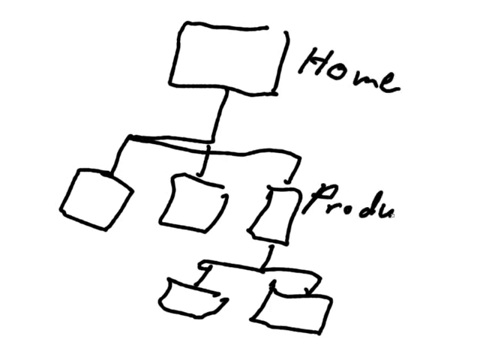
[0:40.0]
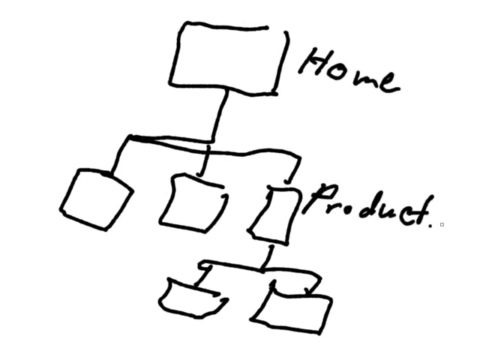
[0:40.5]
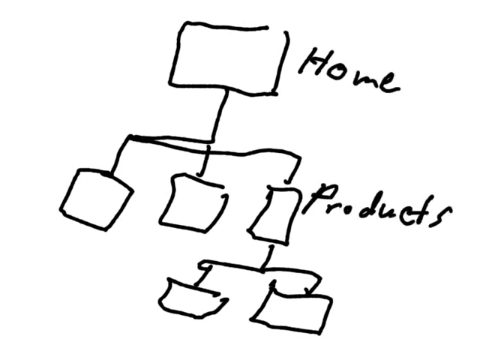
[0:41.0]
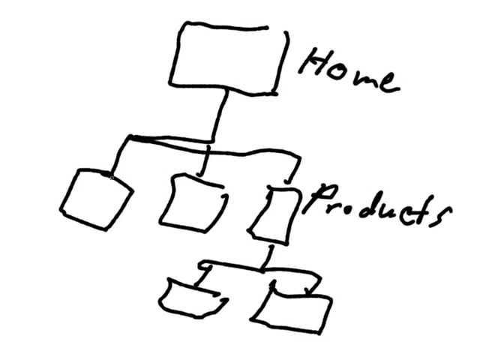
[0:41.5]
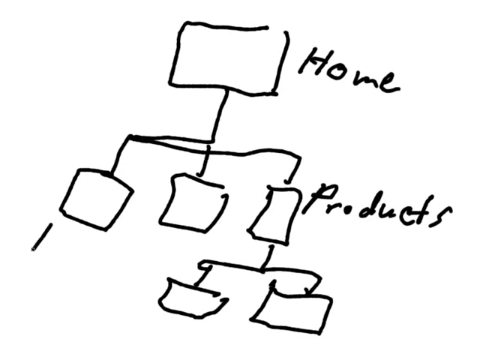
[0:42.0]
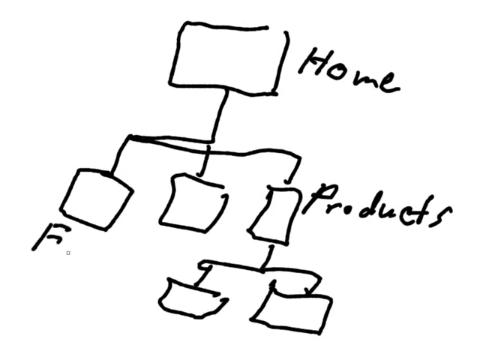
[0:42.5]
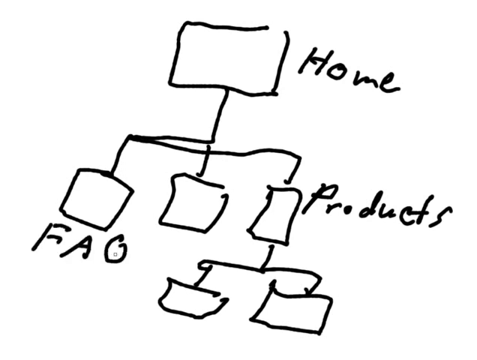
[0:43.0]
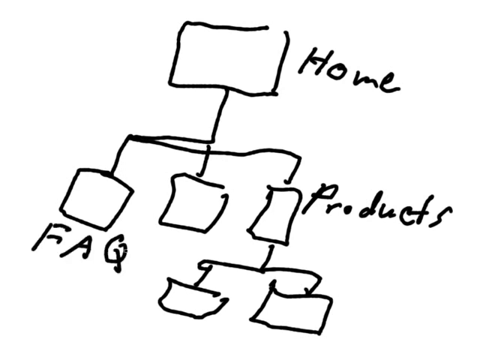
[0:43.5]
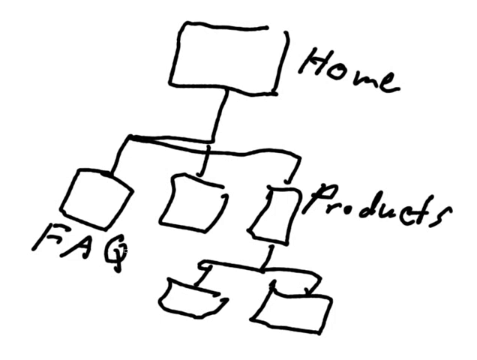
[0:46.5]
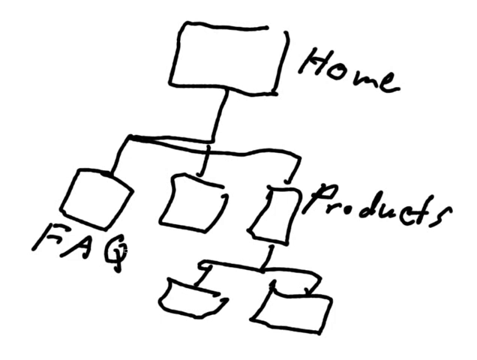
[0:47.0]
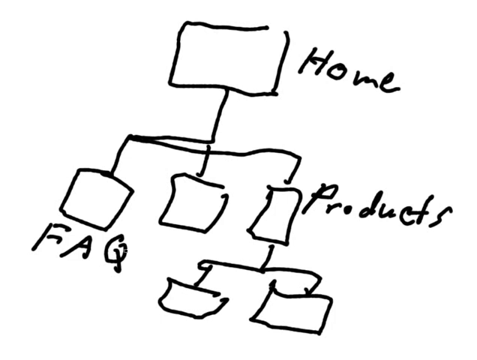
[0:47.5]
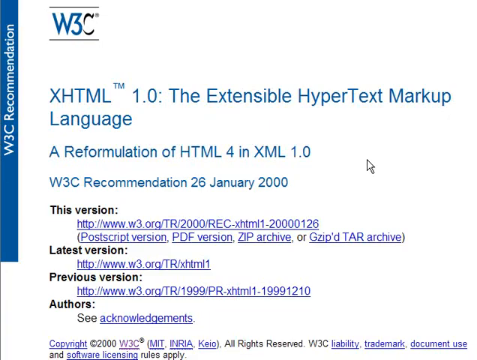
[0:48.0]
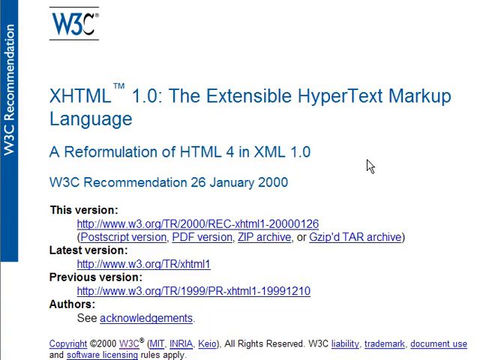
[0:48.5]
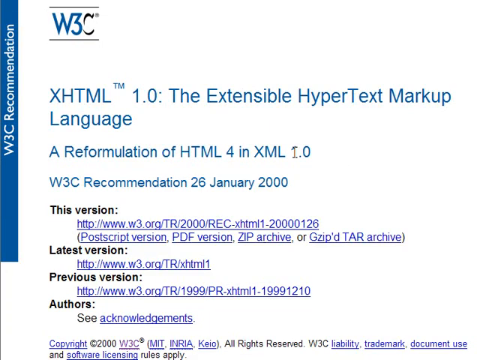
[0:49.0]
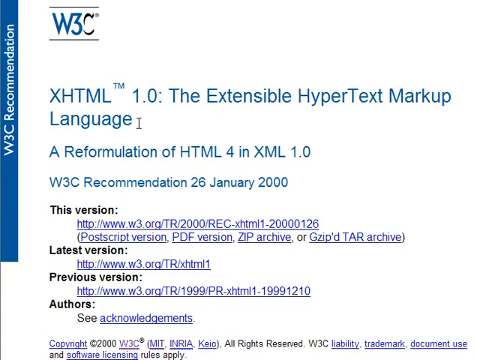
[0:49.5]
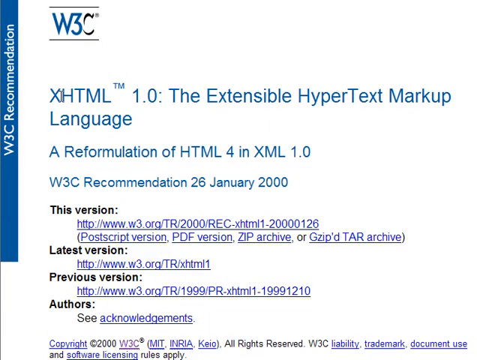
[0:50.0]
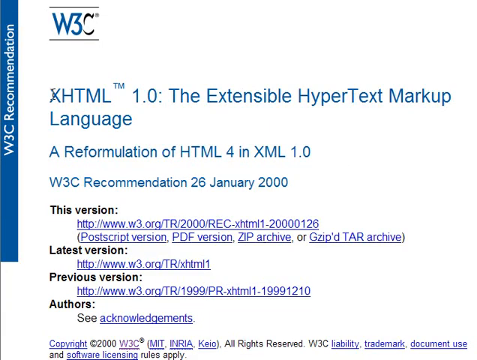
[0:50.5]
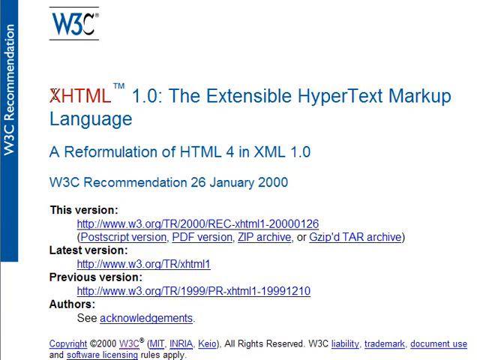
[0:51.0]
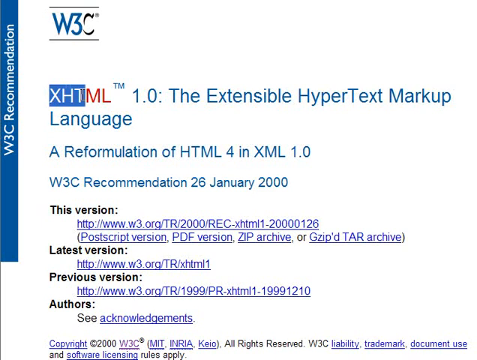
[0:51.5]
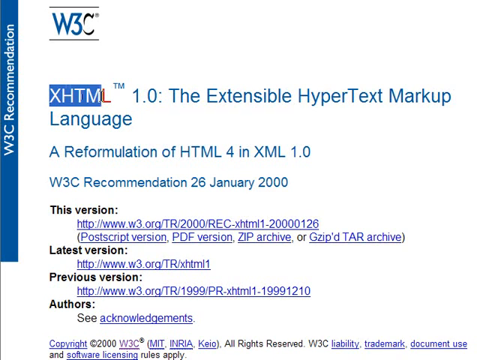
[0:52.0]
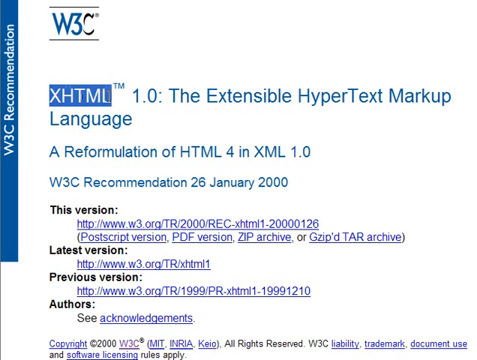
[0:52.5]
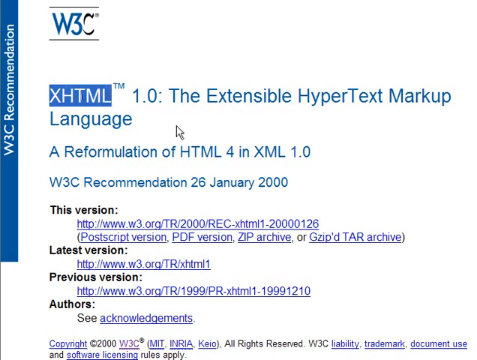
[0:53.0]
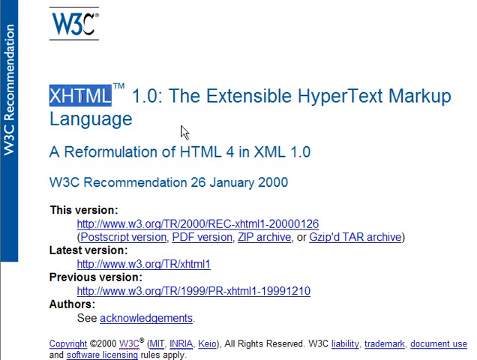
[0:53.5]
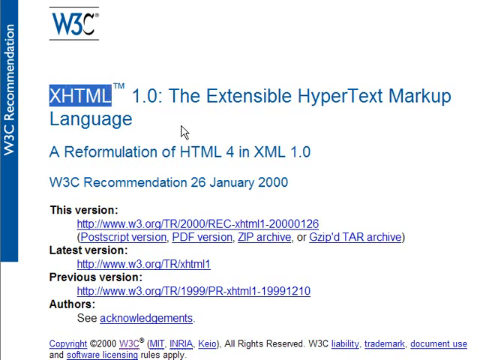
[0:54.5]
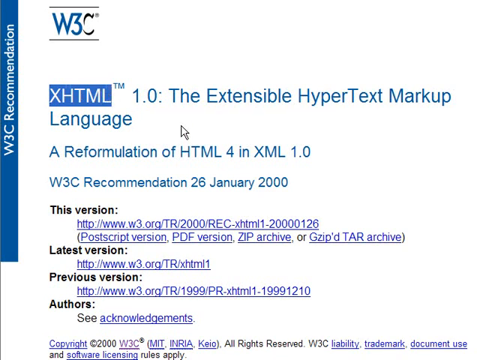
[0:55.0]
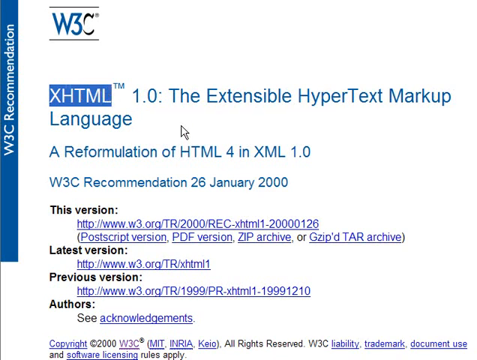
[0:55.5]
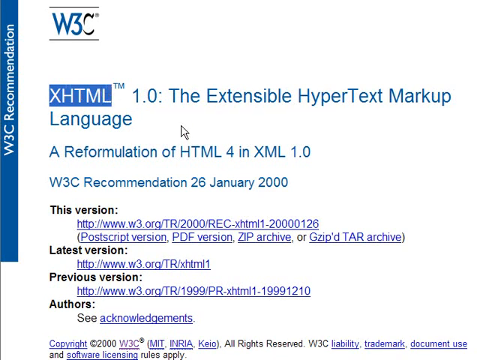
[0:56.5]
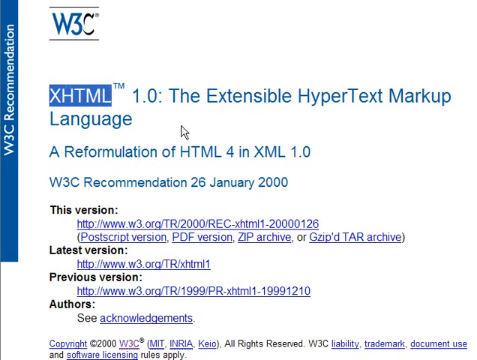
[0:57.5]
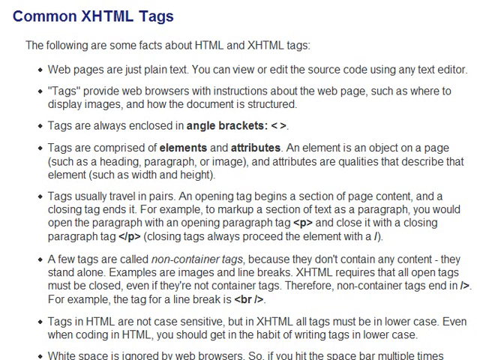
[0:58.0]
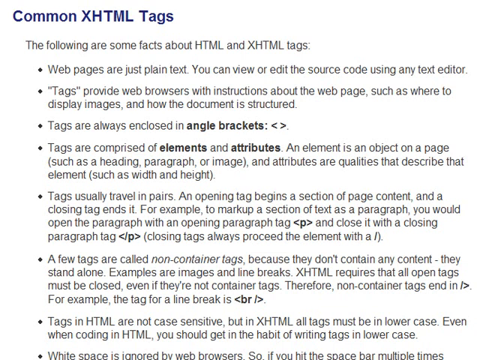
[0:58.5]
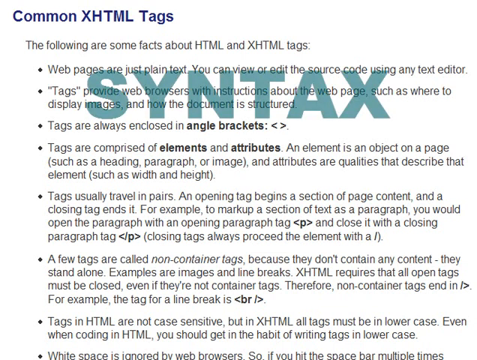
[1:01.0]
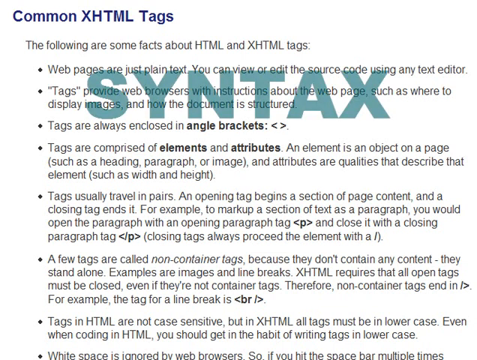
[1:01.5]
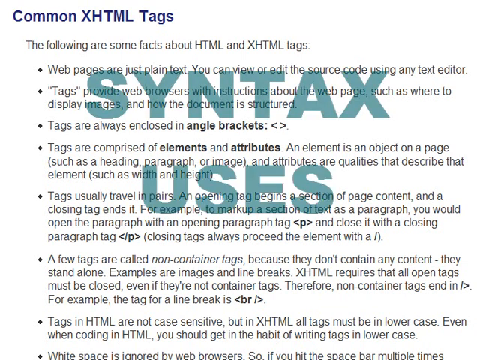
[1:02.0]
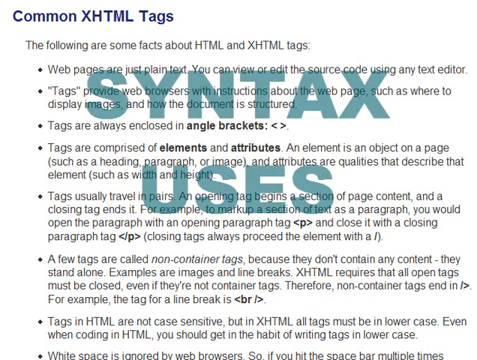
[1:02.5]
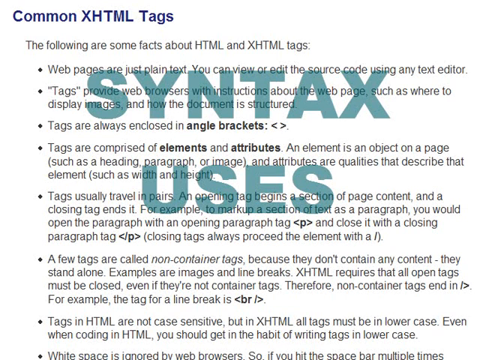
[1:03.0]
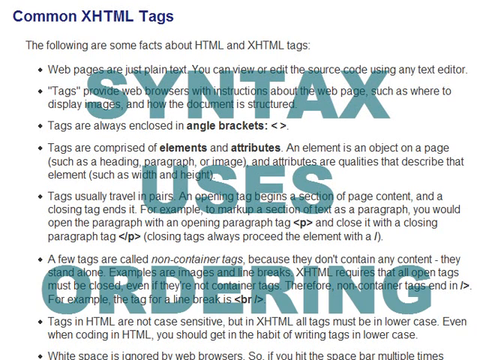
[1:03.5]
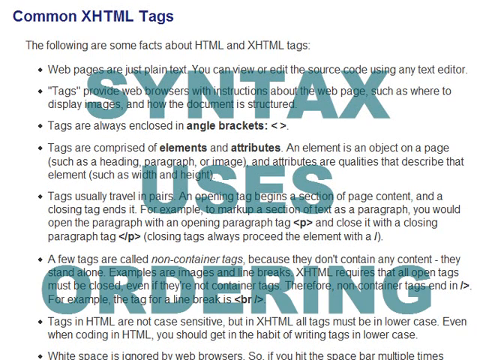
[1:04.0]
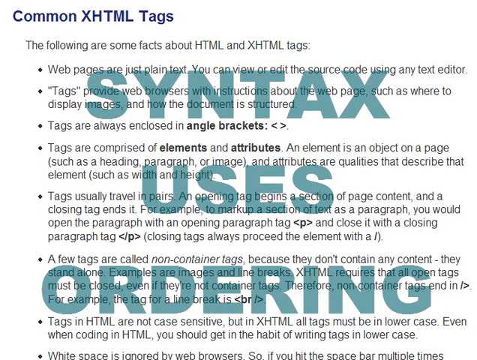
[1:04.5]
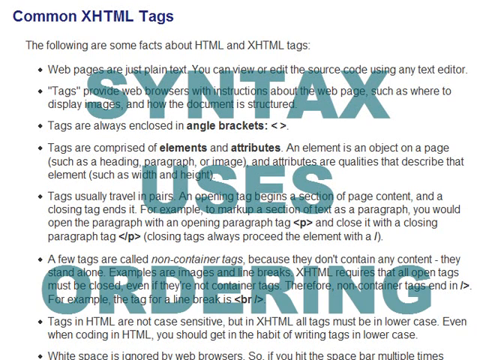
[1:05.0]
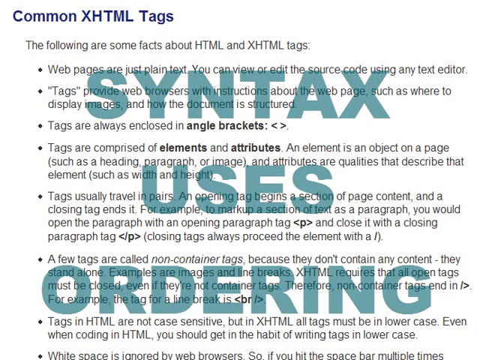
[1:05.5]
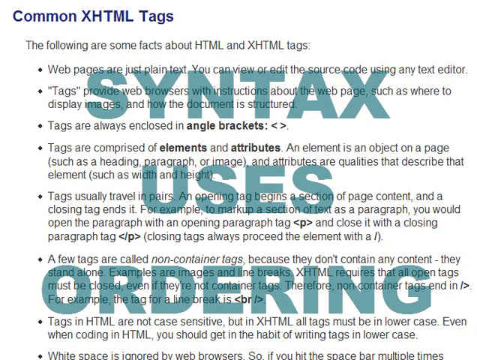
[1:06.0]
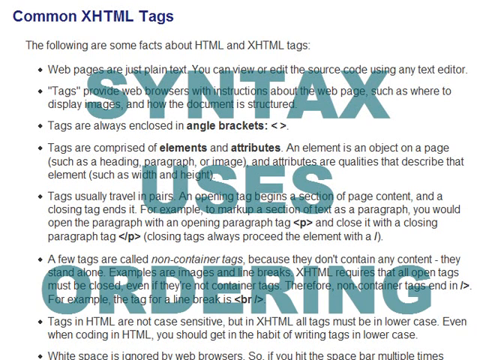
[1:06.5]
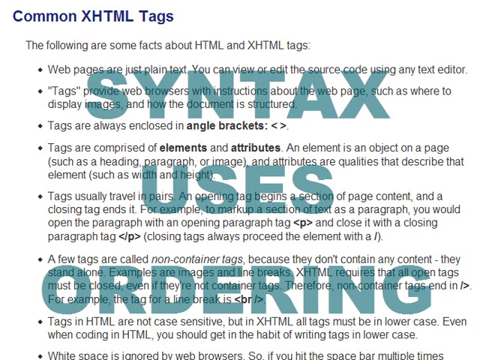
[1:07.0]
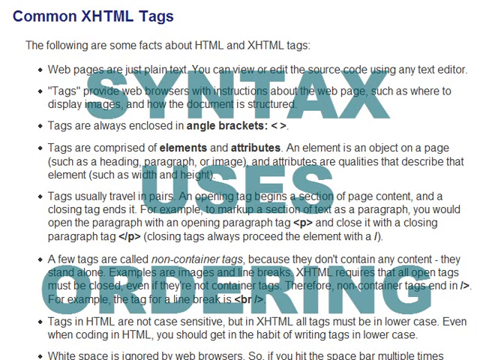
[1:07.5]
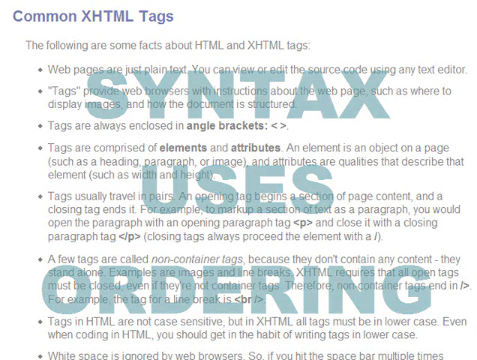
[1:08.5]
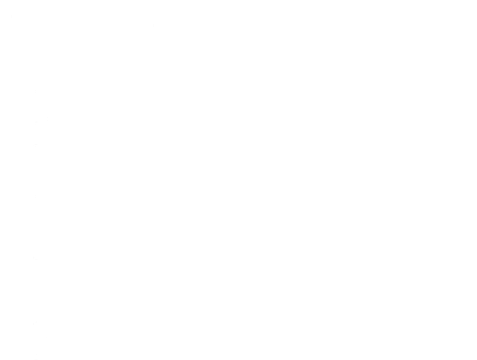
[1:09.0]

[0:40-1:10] A small graph or diagram appears, with a square at the bottom and branches coming off it, labeled with the words "home", "products" and "FAQ", along with a bar. A web page follows, reading "XHTML 1.0 the extensible hypertext markup language", with "latest version" and "previous version". Then a page headed "common XHTML tags" reads "The following are some facts about HTML and XHTML tags. Web pages are just plain text. You can review or edit the source code using any text editor." and "Tags are always enclosed in angle brackets." Below that is the word "syntax".